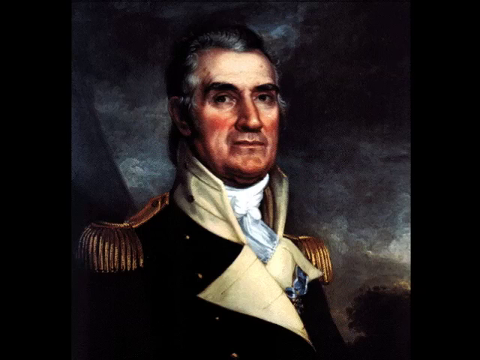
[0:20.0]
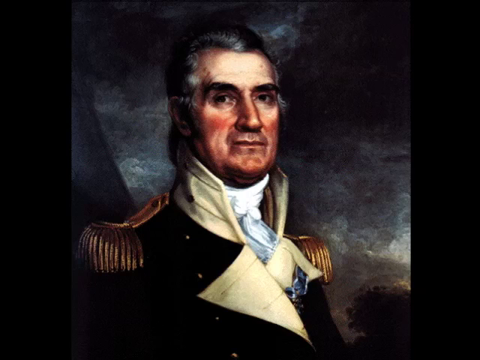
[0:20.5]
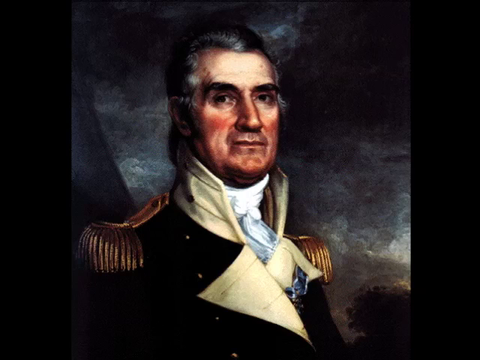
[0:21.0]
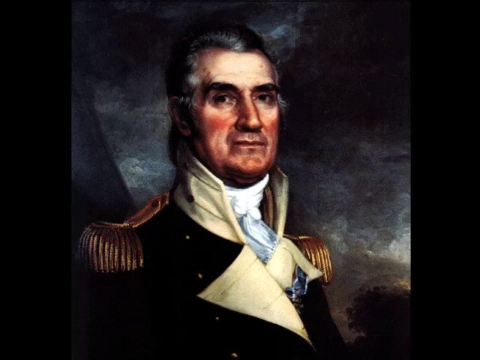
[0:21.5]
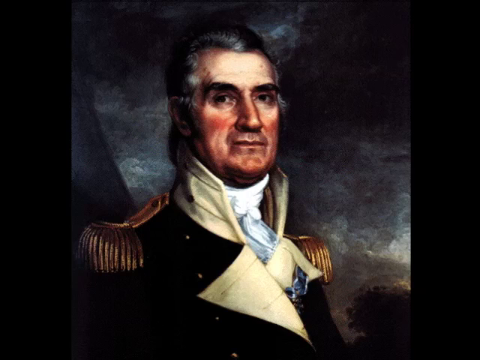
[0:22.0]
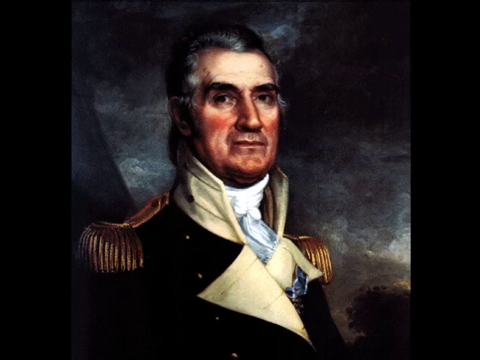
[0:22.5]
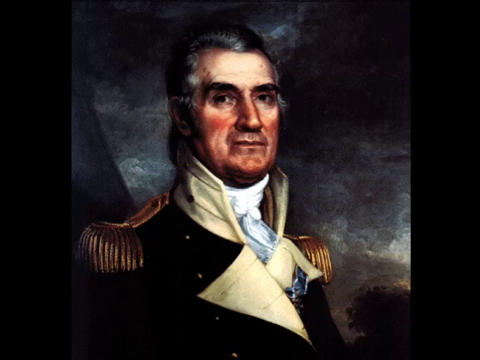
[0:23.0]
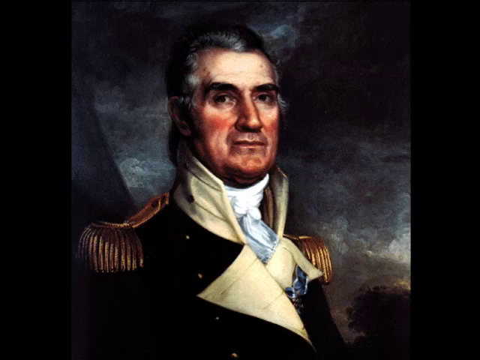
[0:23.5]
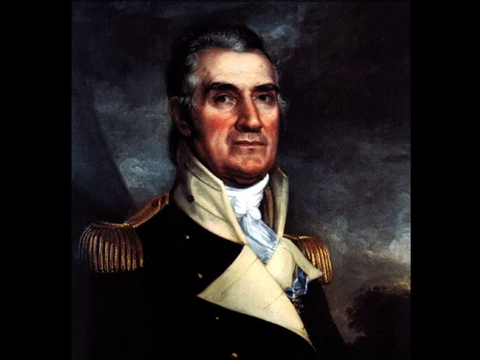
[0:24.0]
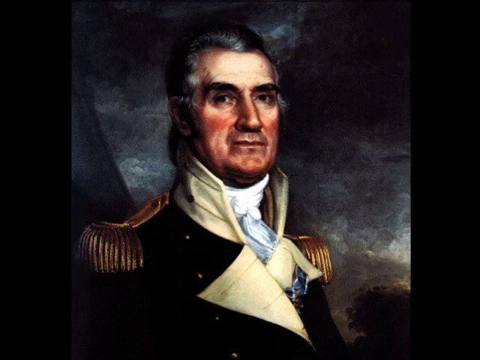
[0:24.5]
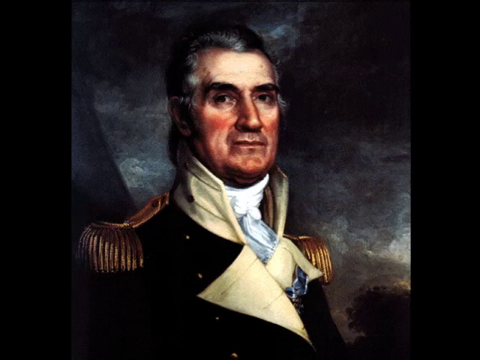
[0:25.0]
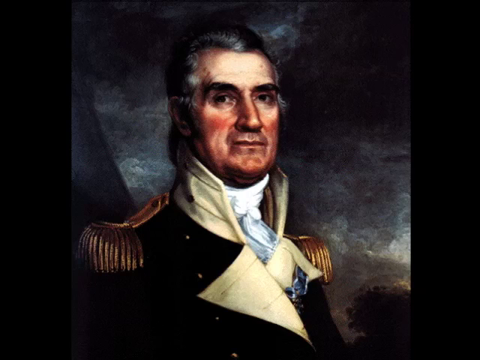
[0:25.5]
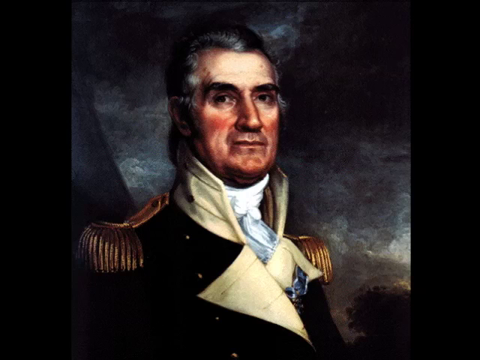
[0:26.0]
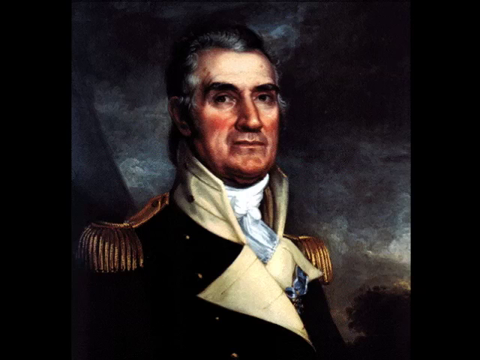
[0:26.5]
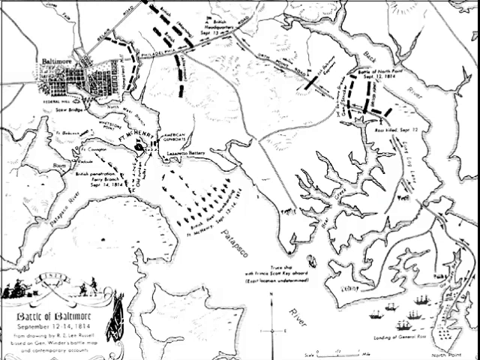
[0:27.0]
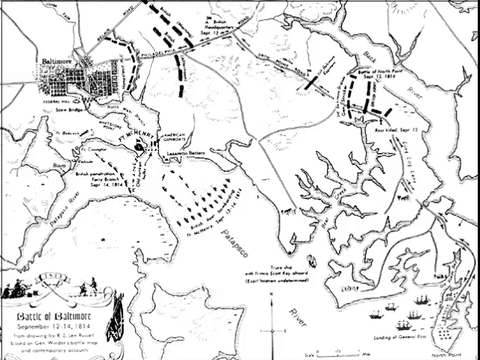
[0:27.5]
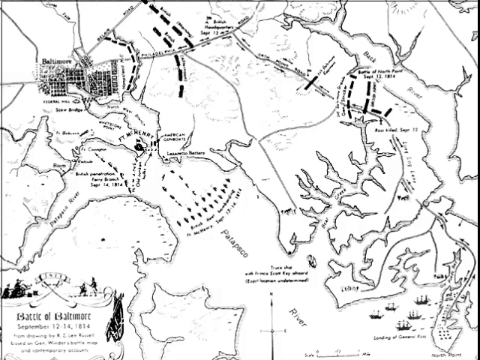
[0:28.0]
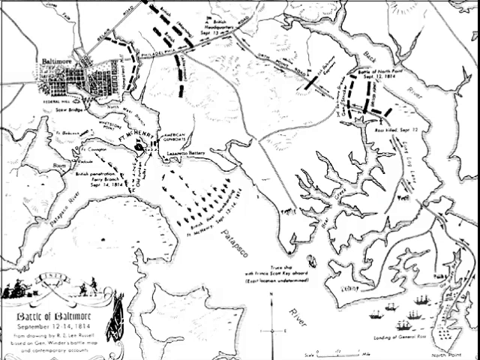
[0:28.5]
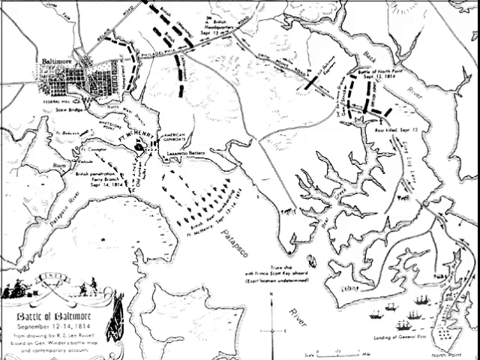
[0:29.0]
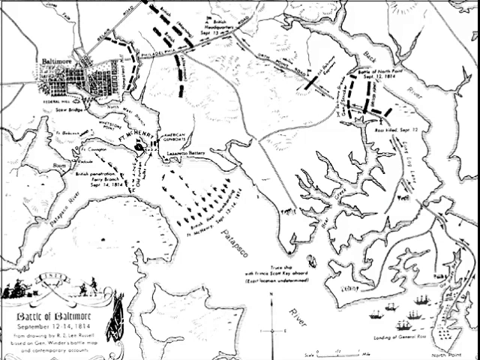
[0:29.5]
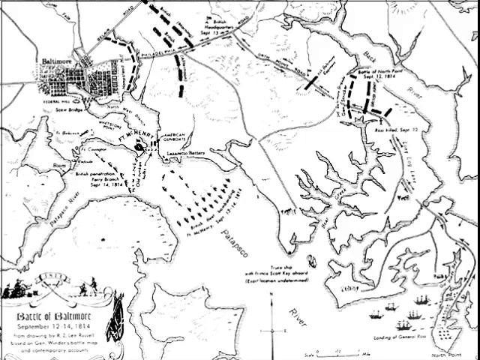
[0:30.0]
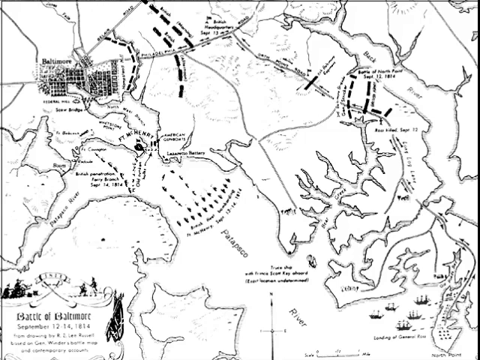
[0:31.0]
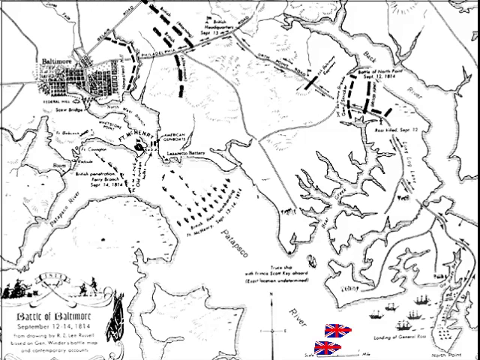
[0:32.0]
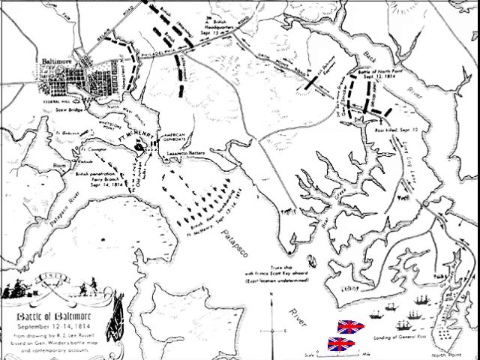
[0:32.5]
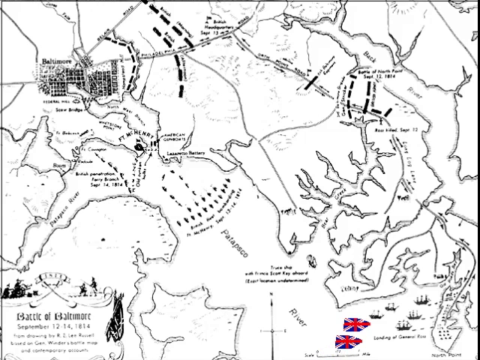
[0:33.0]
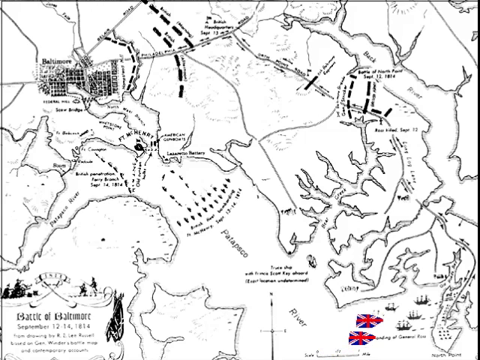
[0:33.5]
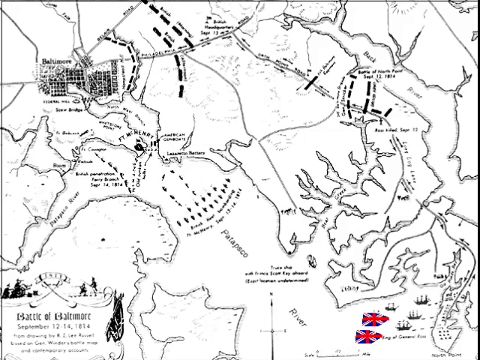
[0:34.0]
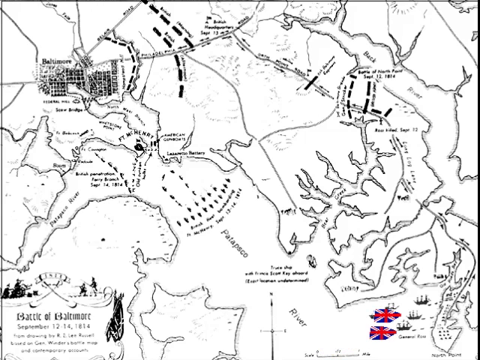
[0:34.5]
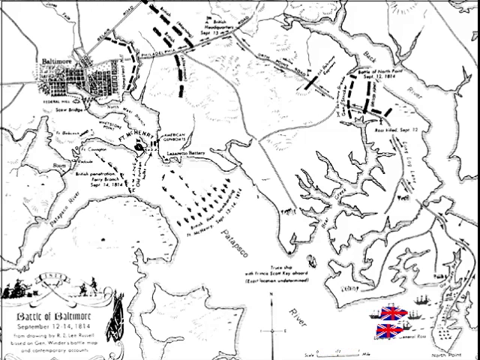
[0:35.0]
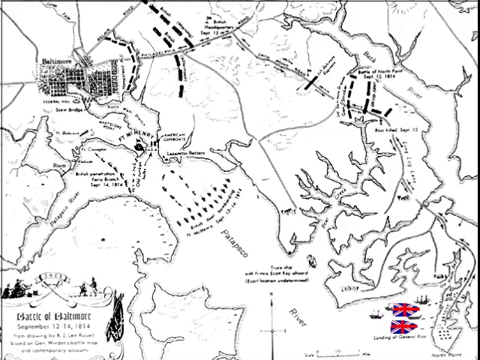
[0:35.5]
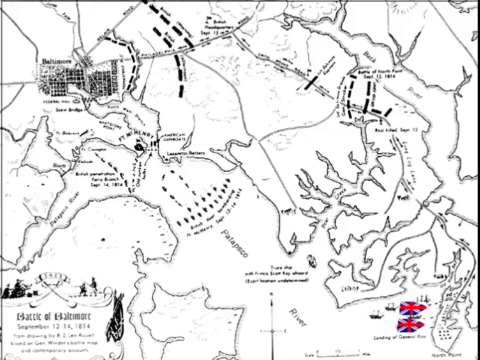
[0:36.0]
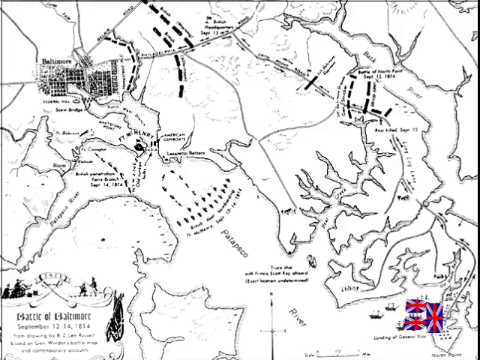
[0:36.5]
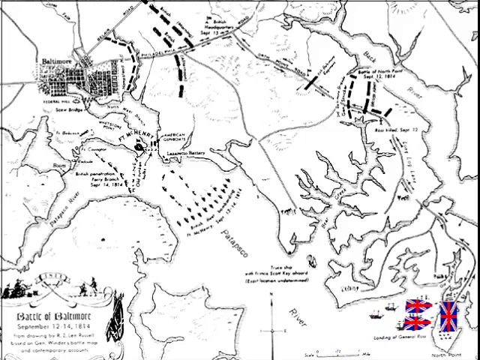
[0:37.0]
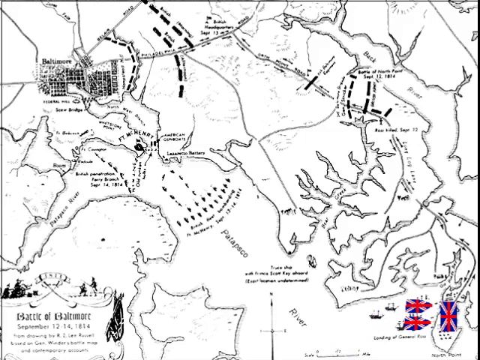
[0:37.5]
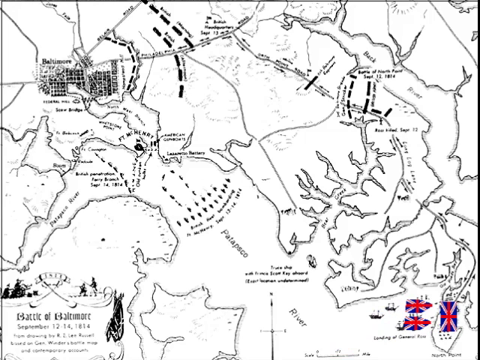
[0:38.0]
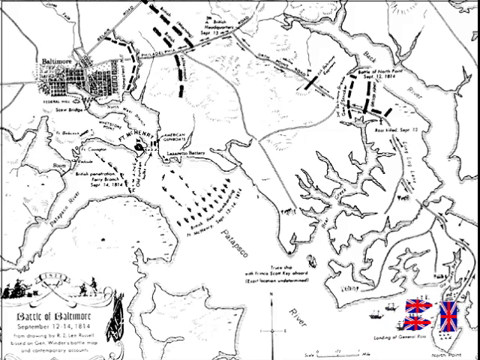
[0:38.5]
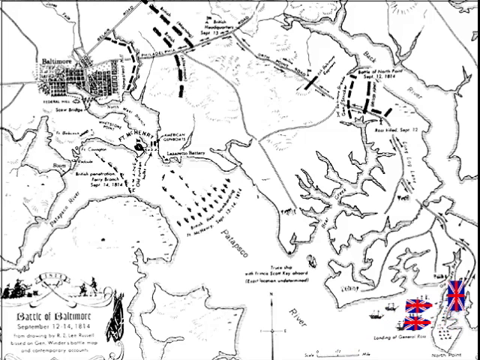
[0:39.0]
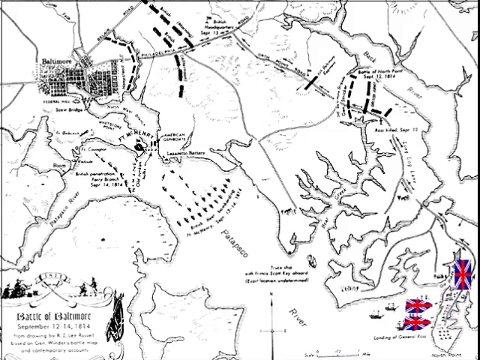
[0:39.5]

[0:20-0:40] An aerial view shows a drawn map with landmasses and a waterway. Most of the writing is not legible, but "Battle of Baltimore" appears in the bottom left-hand corner. Movement appears at the bottom right of the screen: red, white and blue flags of Great Britain, three in all, move over ships in the waterway just off the coast, then onto land and further inland, as if Great Britain's military force overtook the ships in the harbor and went inland. The river is possibly the Patapasco River.